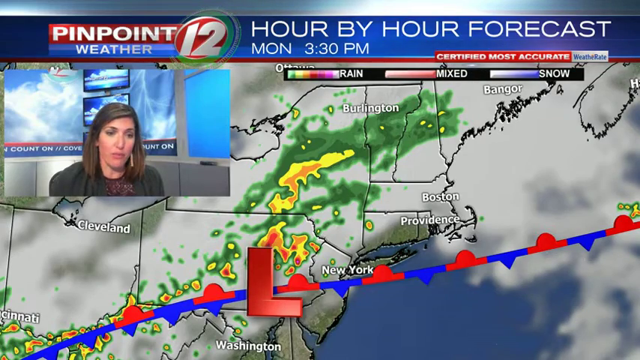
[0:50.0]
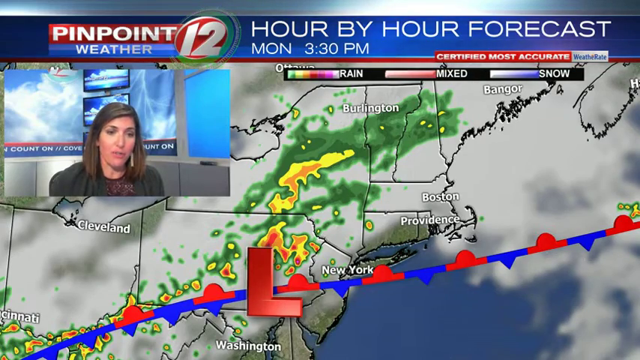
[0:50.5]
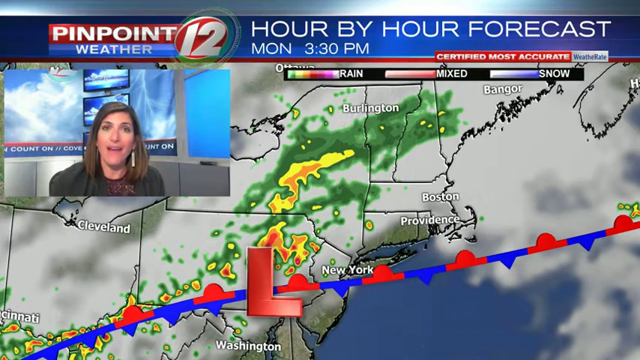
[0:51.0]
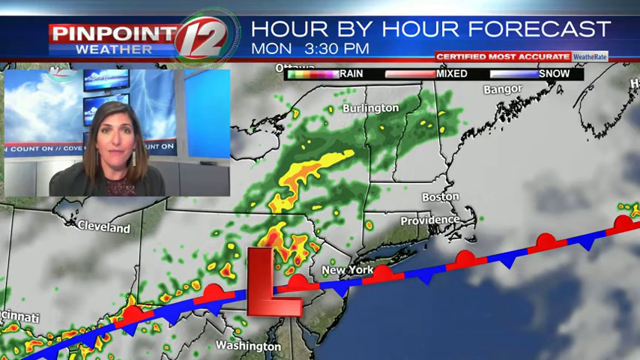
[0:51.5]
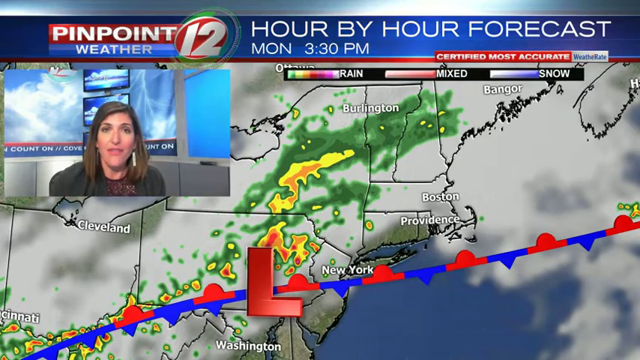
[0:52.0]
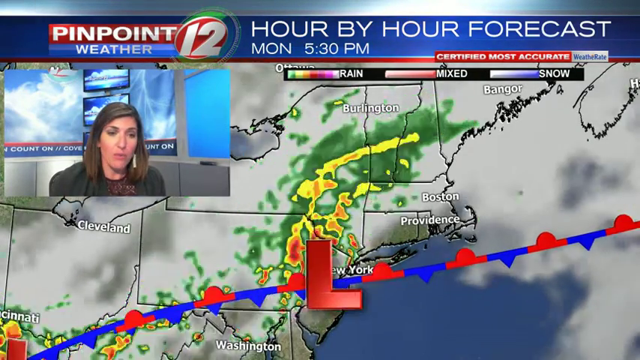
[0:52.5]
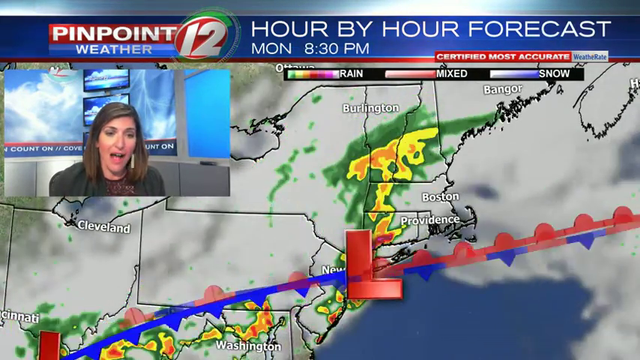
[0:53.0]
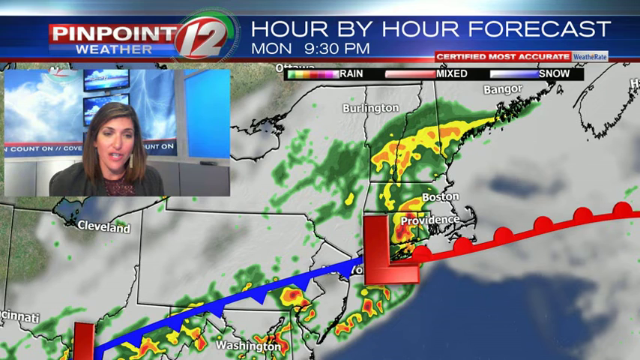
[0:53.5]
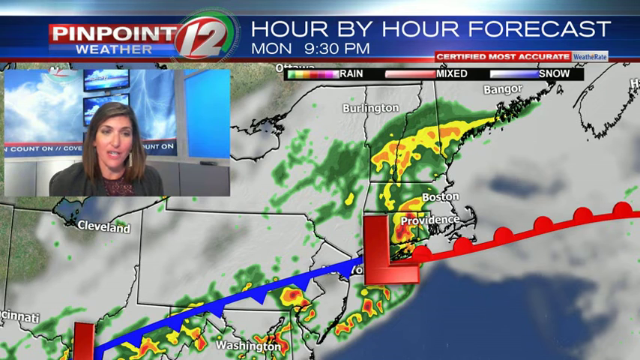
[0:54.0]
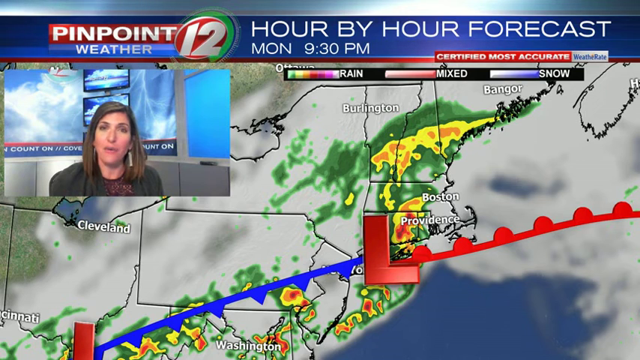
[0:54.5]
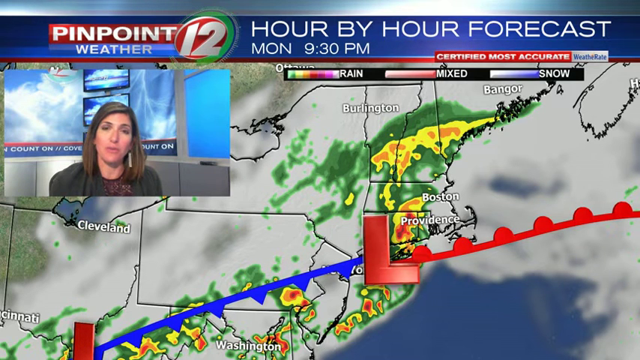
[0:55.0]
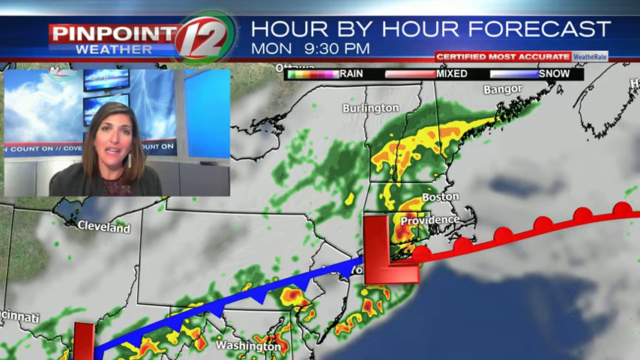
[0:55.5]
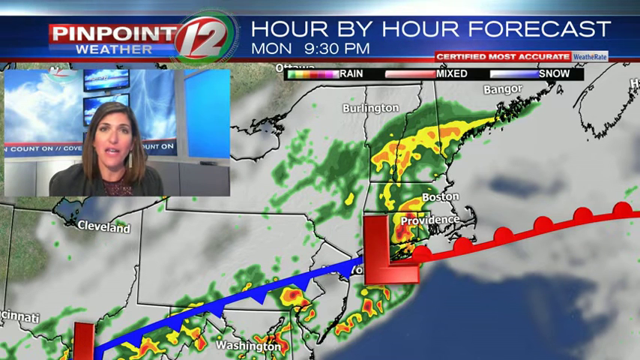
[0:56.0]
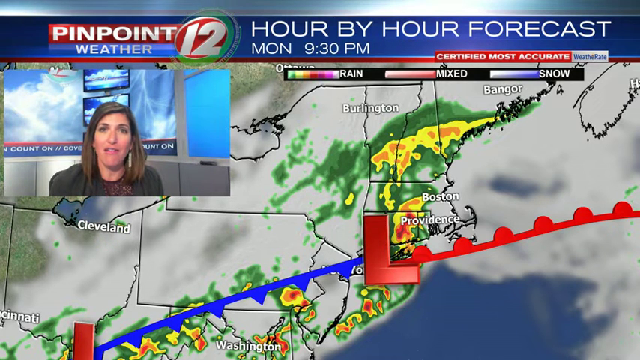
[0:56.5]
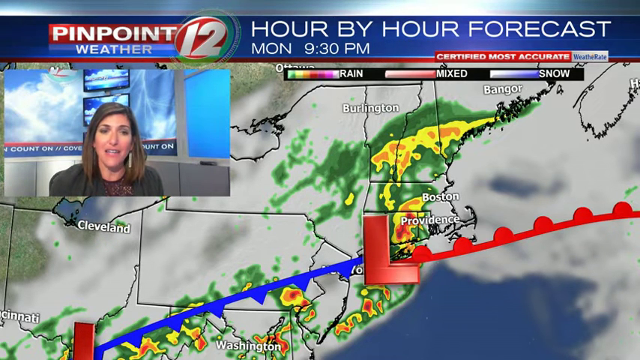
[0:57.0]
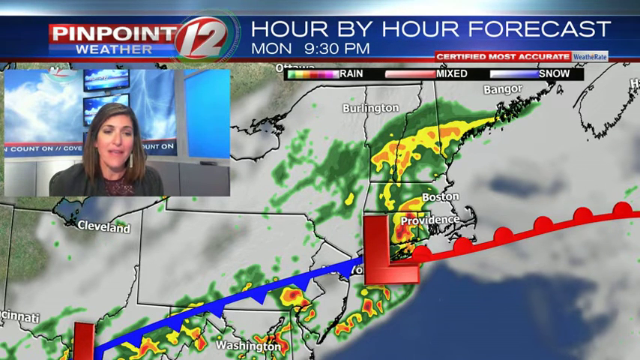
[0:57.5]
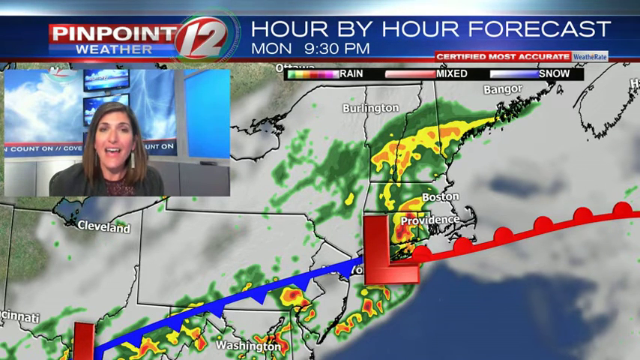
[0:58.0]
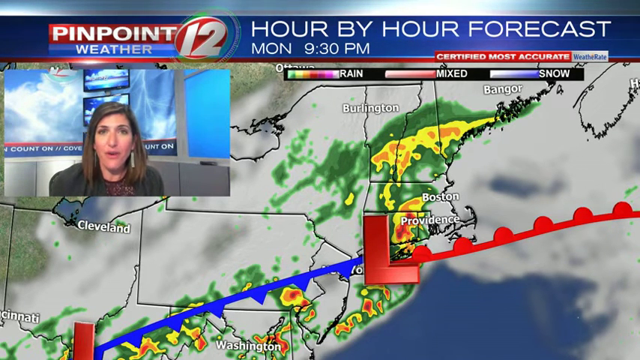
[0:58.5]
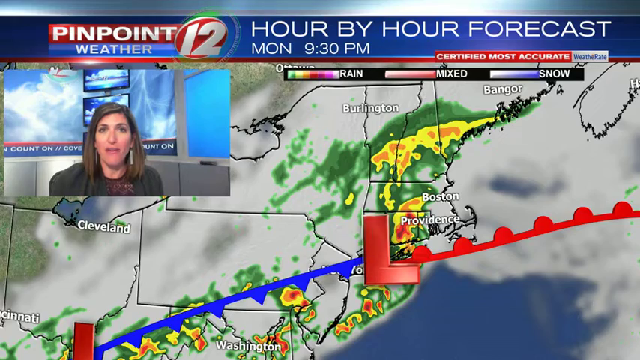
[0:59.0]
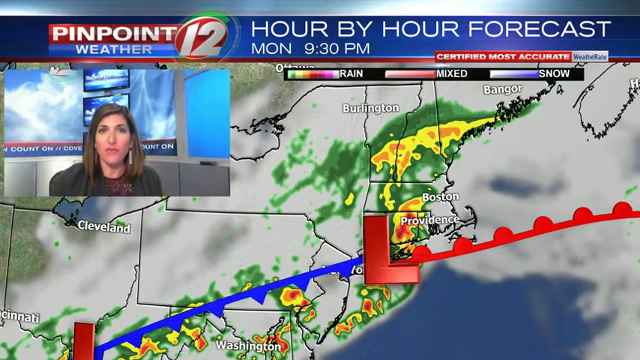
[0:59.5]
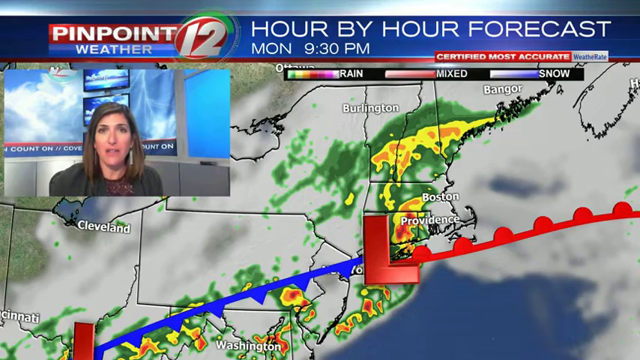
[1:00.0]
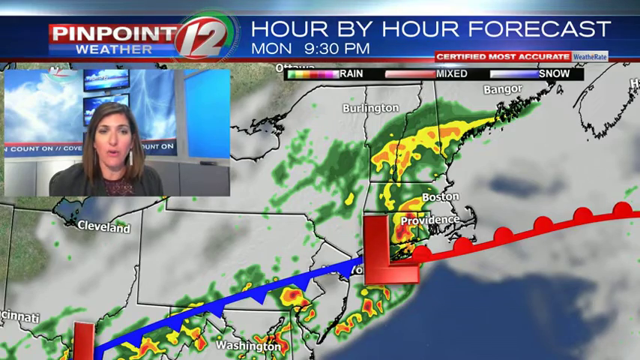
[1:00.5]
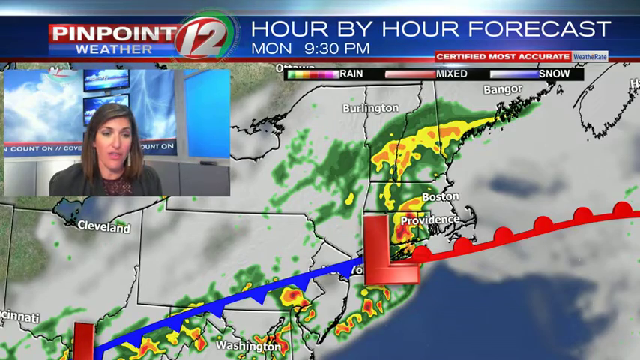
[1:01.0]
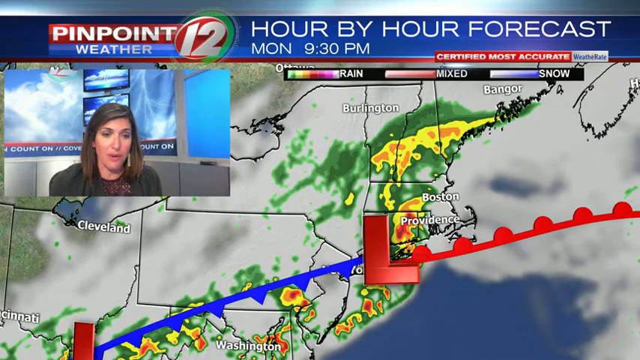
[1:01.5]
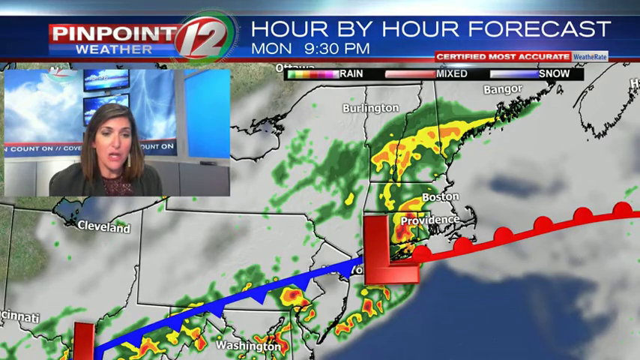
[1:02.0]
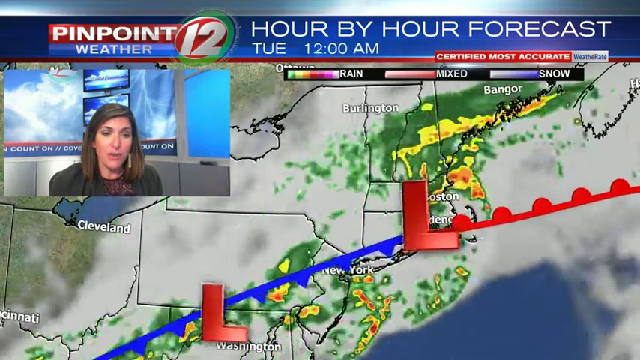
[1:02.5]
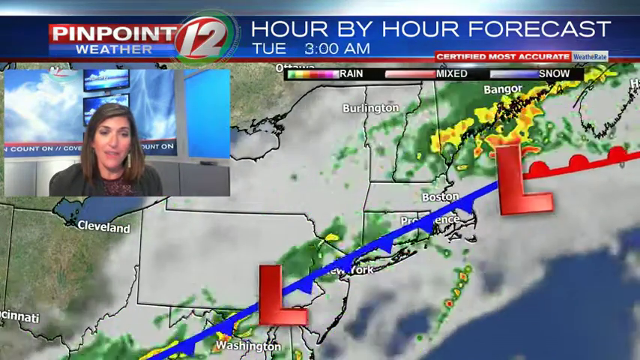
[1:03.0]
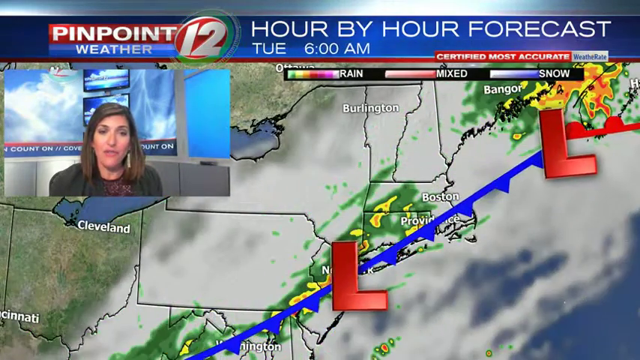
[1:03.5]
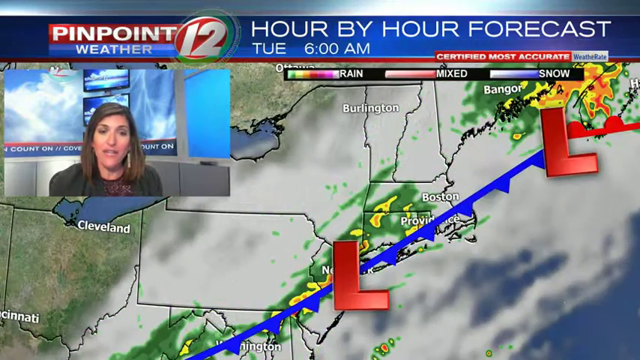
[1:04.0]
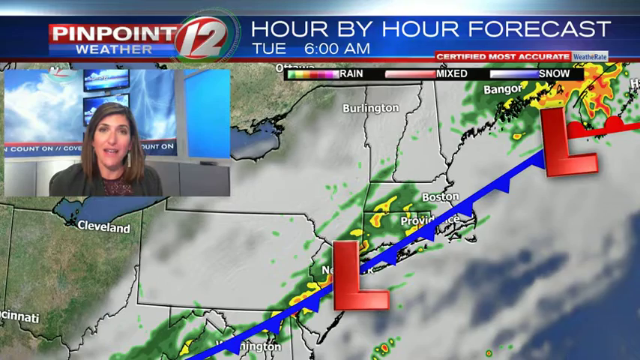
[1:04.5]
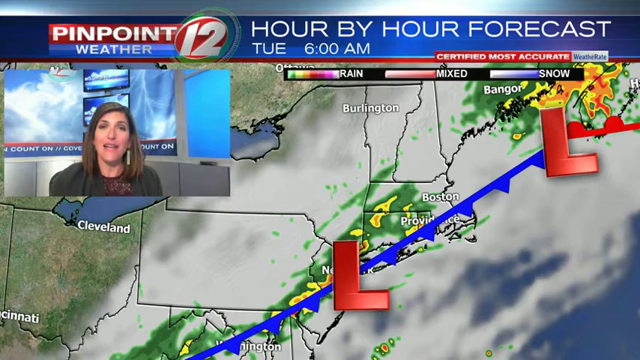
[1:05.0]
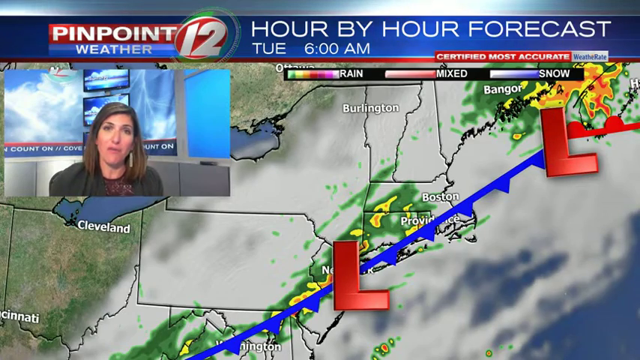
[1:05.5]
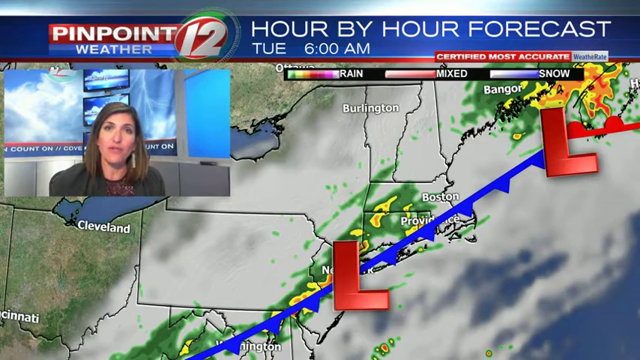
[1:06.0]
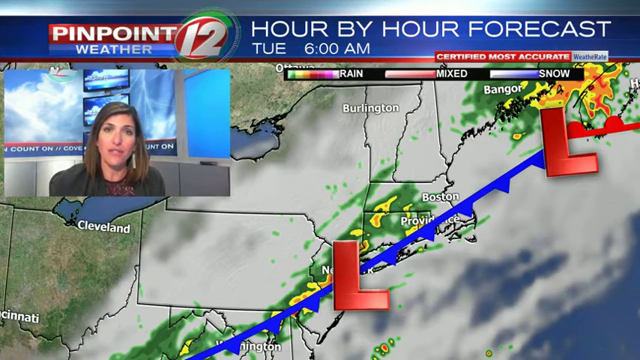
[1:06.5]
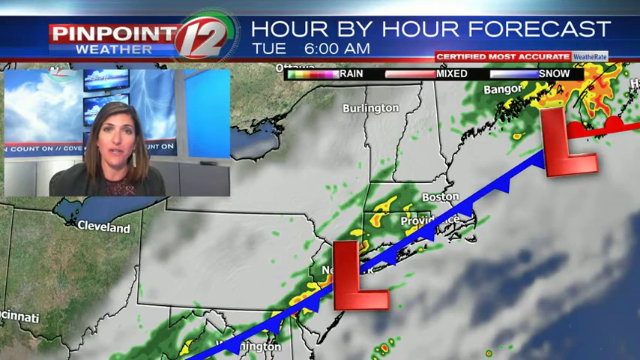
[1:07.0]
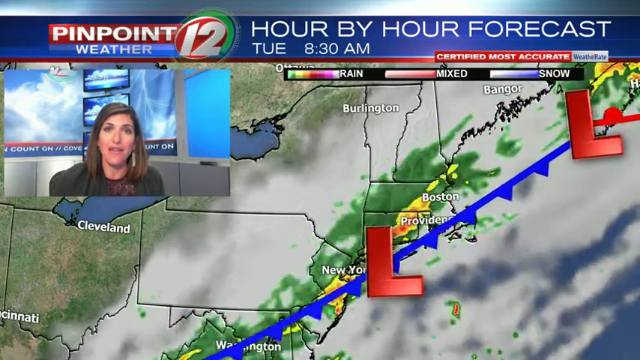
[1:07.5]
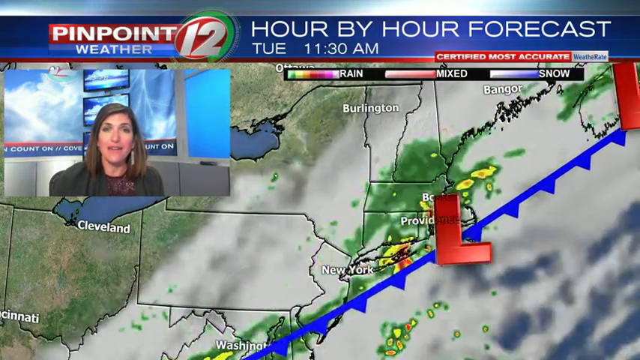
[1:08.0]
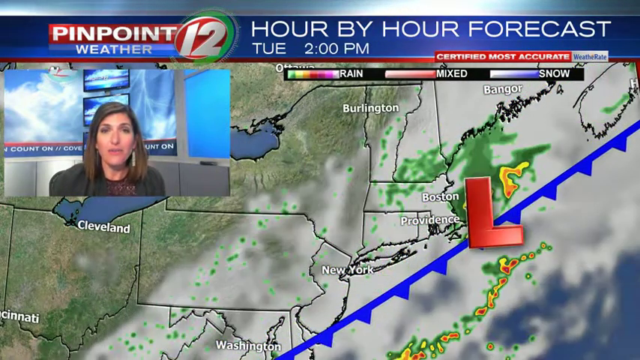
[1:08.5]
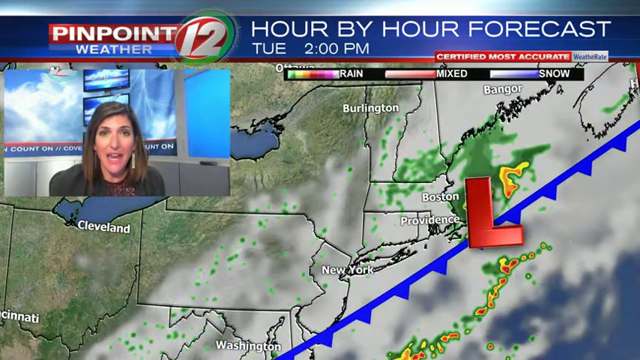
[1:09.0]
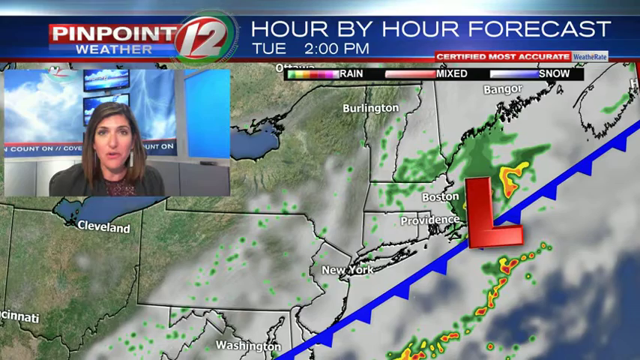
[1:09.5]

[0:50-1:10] The Pinpoint 12 weather hour-by-hour forecast for Monday continues, with the frame of the lady, apparently the meteorologist, still in the top left. Color codes for rain, mixed and snow are shown. The map covers Cleveland, New York, Boston, Birmingham, Providence and Bangor. A white cloud moves from west to east as viewed. In places like New York and Burlington, there is a greenish substance with yellowish, golden-like features inside. The capital L in bold is visible, and the lady is still speaking. The map then moves to Monday 9:30 PM; the cloud-like feature is still moving and covers Cleveland, Bangor, New York, Boston and Providence, while the green covers part of Bangor, part of Burlington, Boston and Providence.